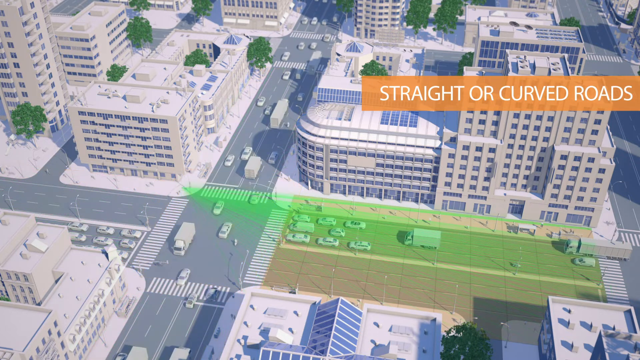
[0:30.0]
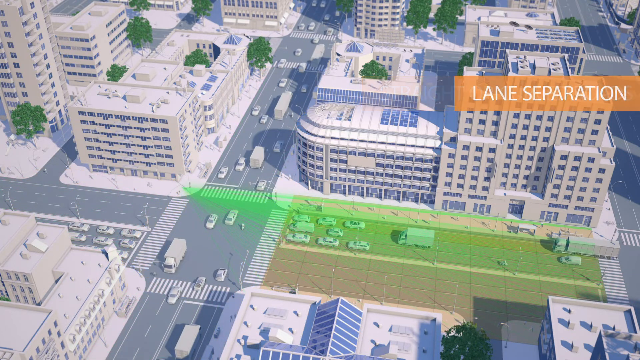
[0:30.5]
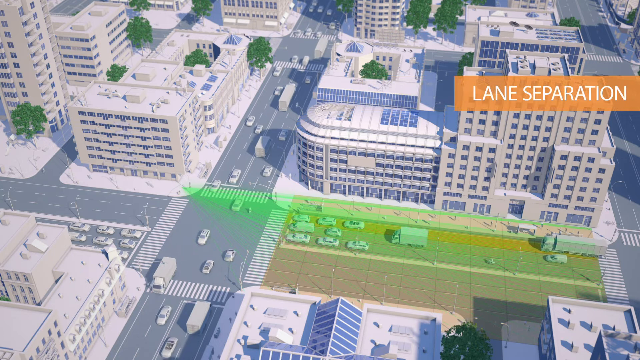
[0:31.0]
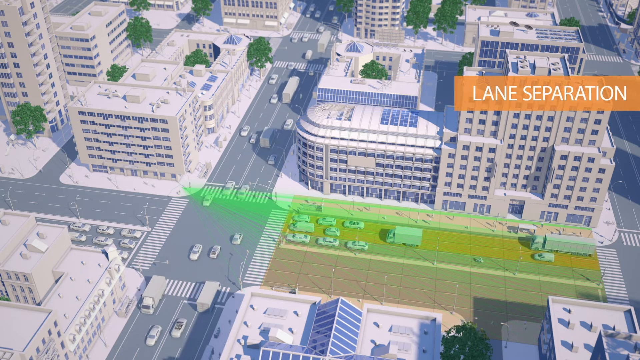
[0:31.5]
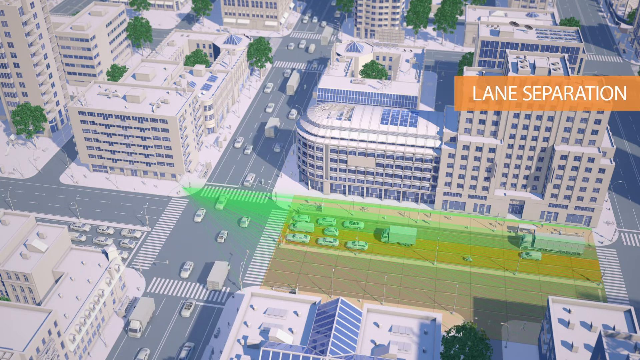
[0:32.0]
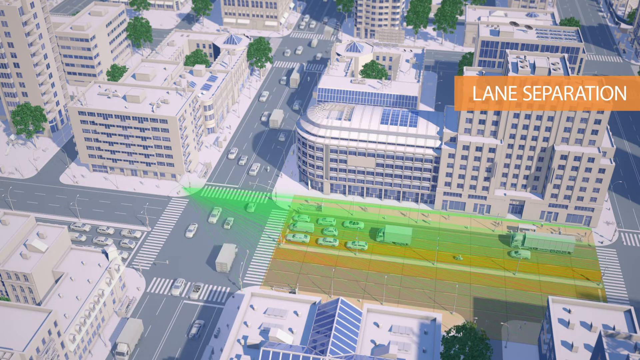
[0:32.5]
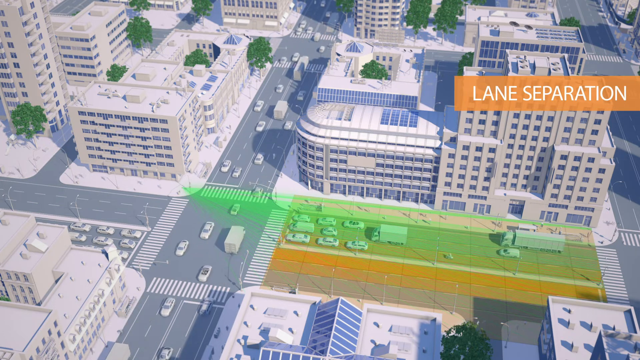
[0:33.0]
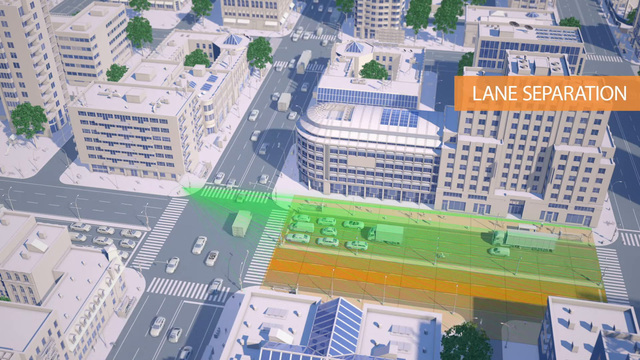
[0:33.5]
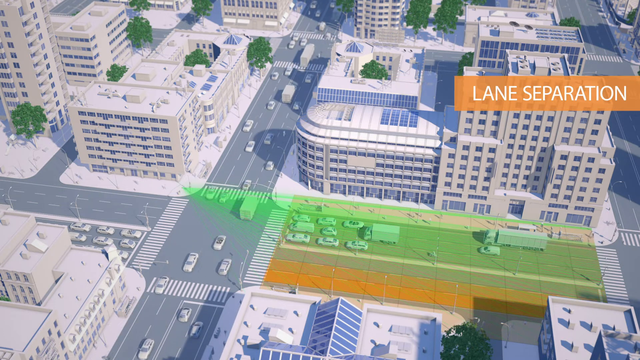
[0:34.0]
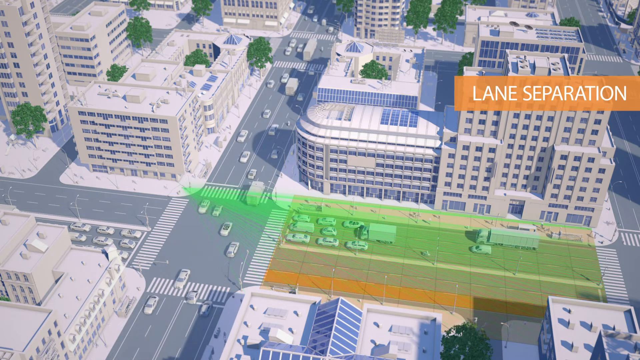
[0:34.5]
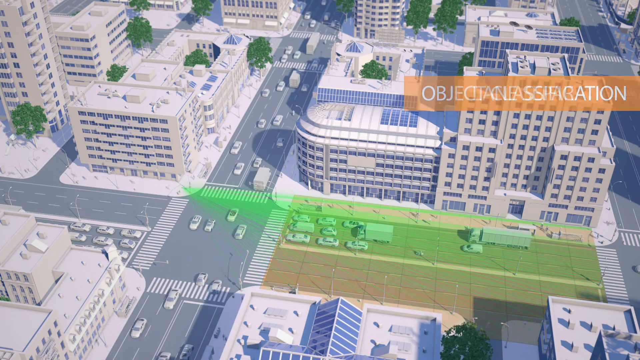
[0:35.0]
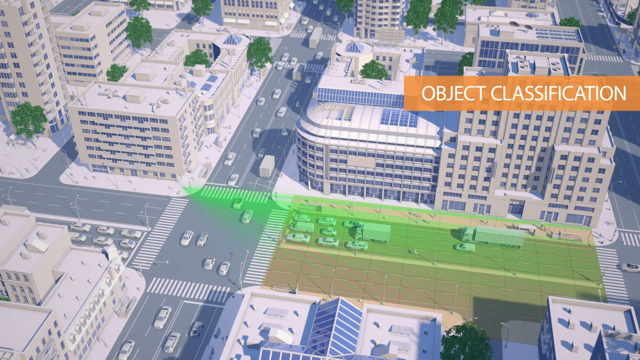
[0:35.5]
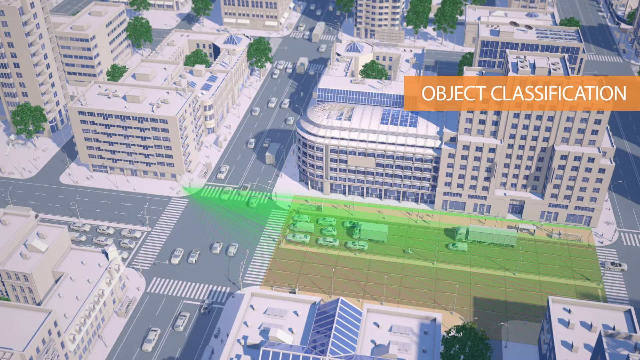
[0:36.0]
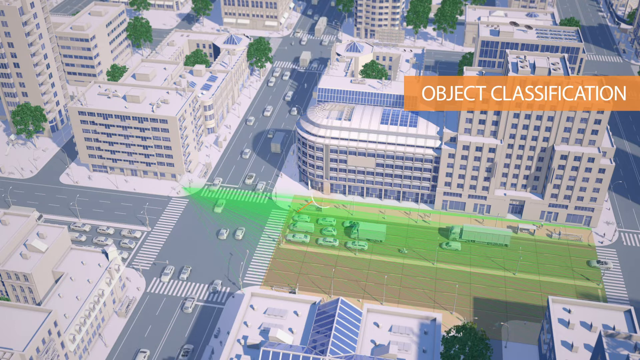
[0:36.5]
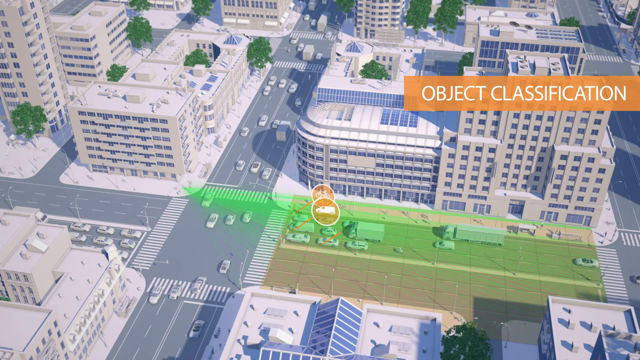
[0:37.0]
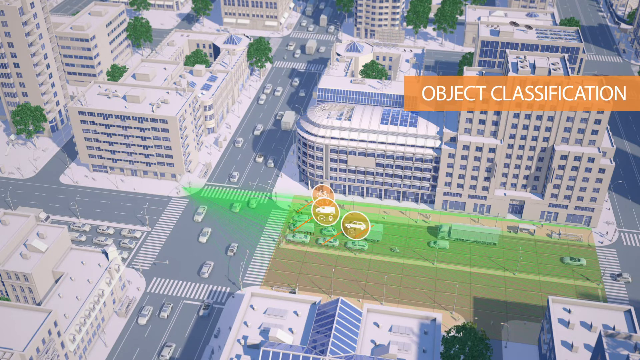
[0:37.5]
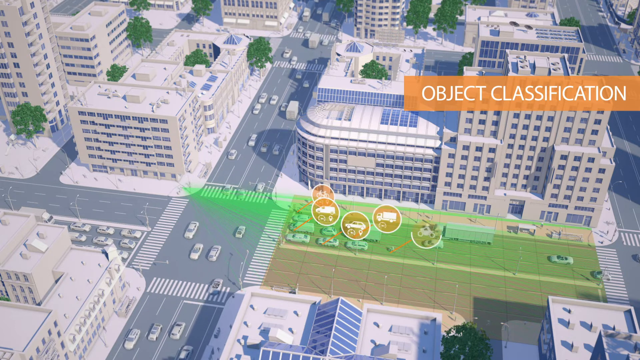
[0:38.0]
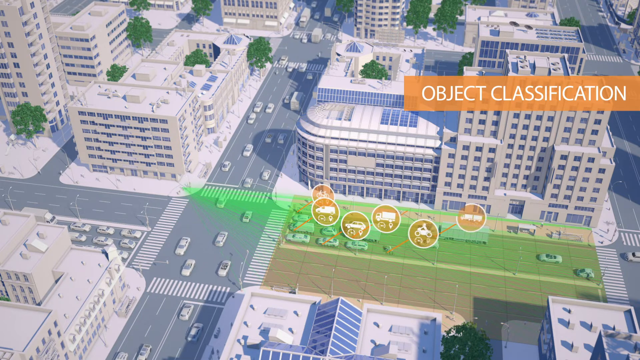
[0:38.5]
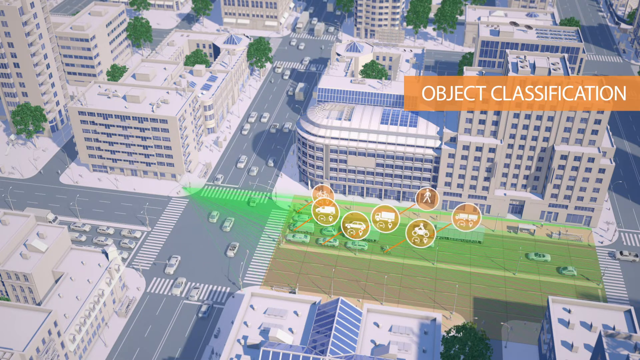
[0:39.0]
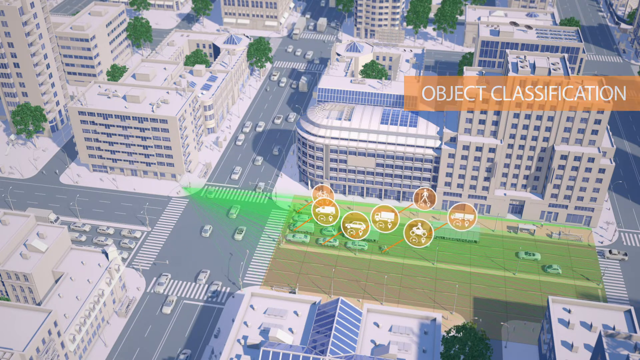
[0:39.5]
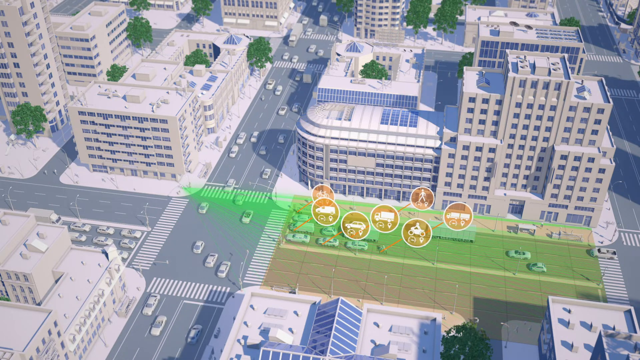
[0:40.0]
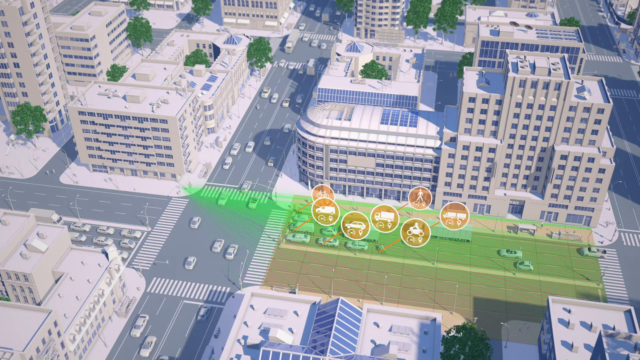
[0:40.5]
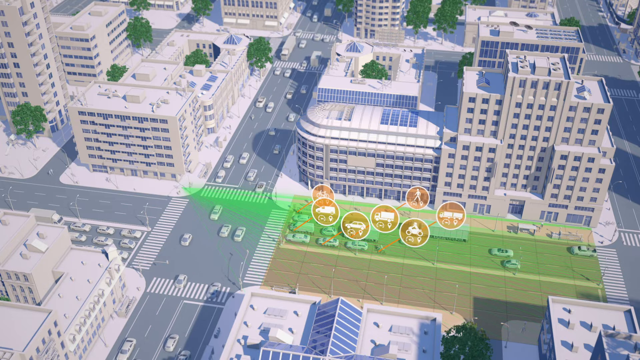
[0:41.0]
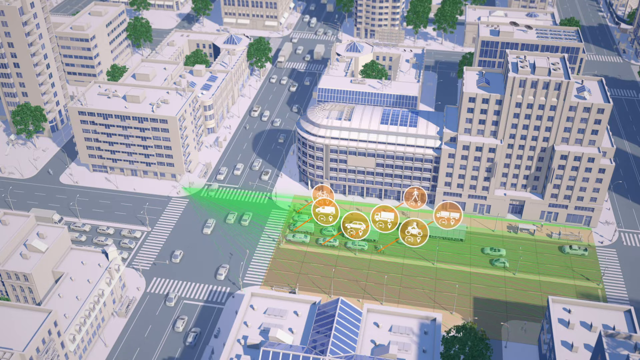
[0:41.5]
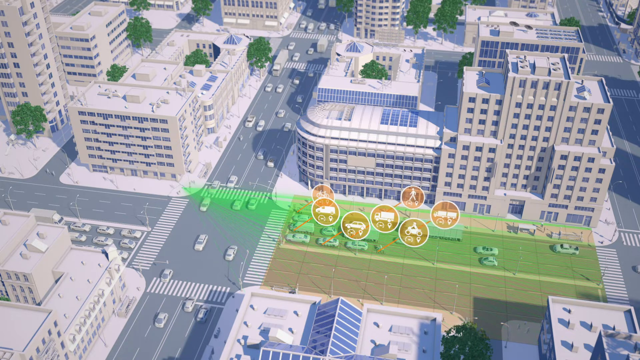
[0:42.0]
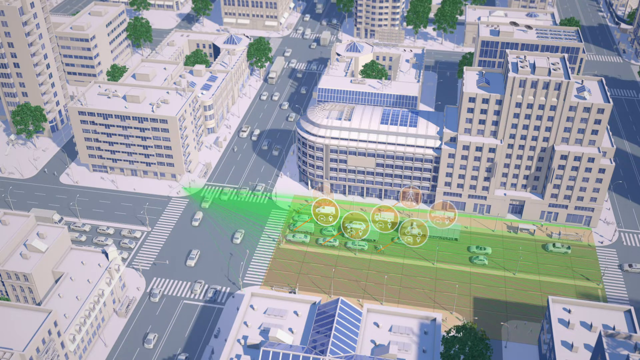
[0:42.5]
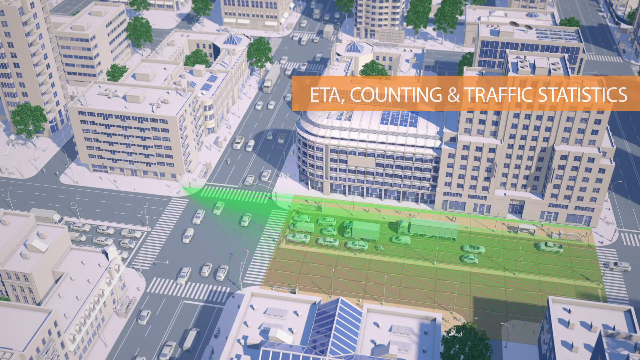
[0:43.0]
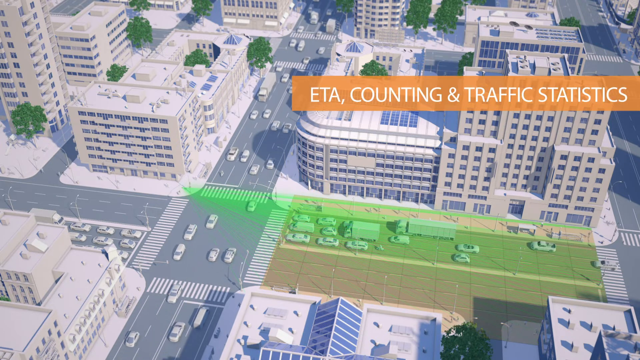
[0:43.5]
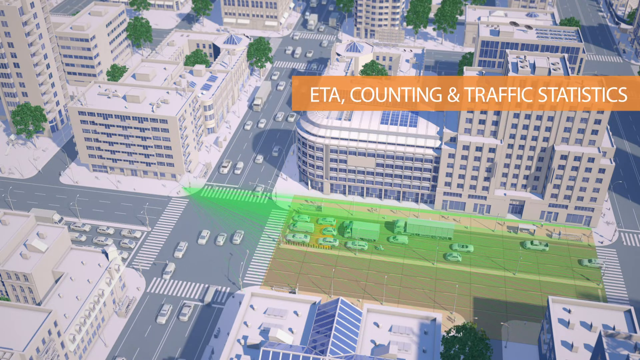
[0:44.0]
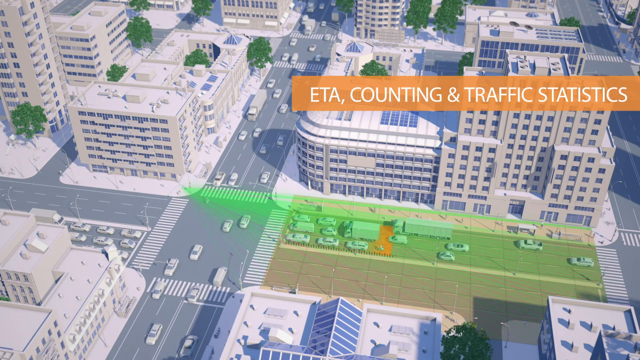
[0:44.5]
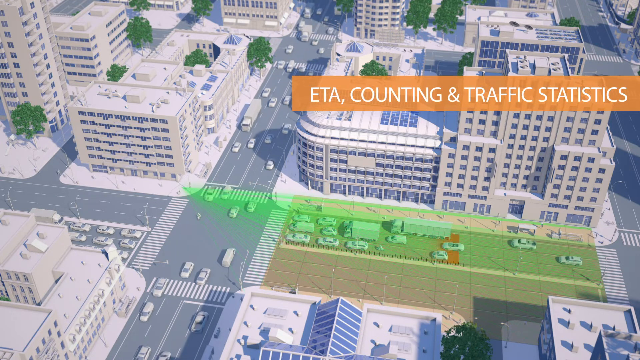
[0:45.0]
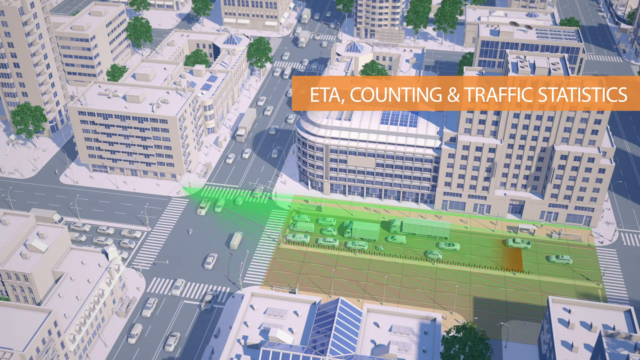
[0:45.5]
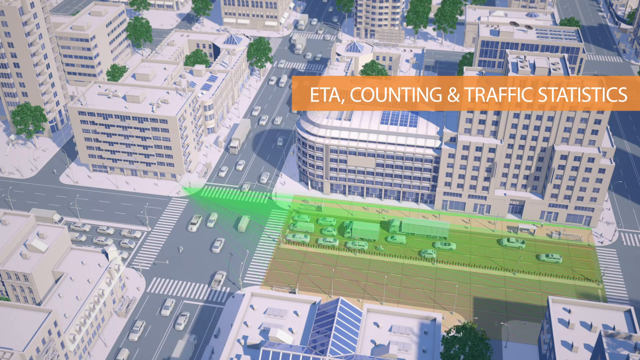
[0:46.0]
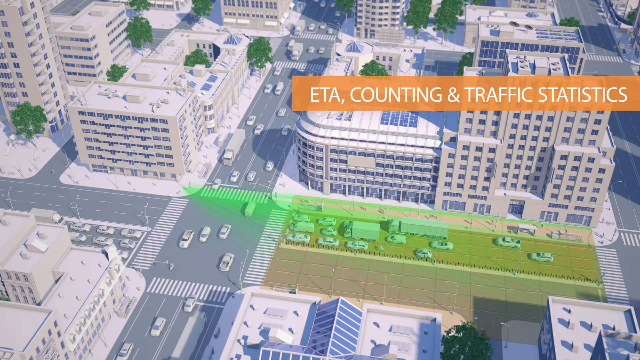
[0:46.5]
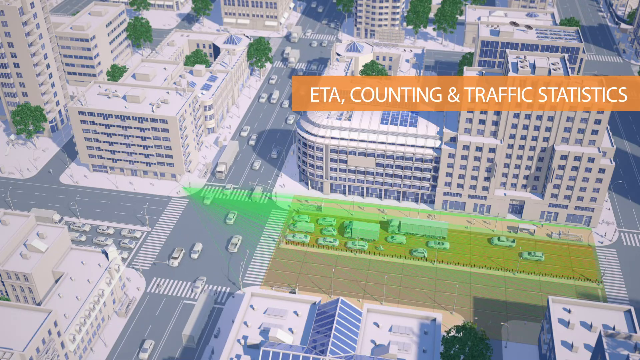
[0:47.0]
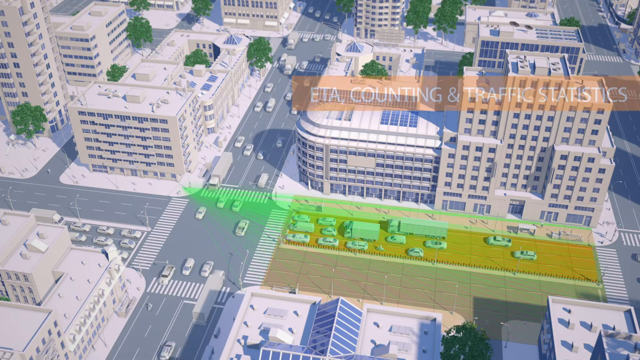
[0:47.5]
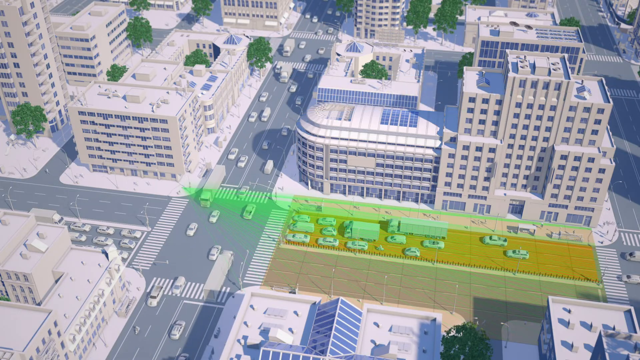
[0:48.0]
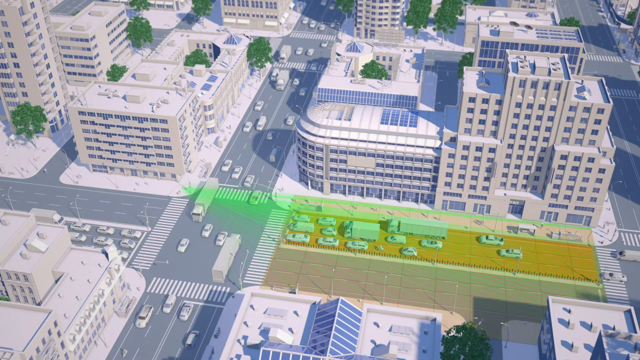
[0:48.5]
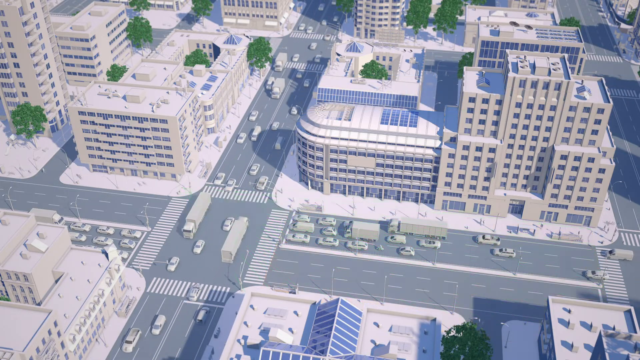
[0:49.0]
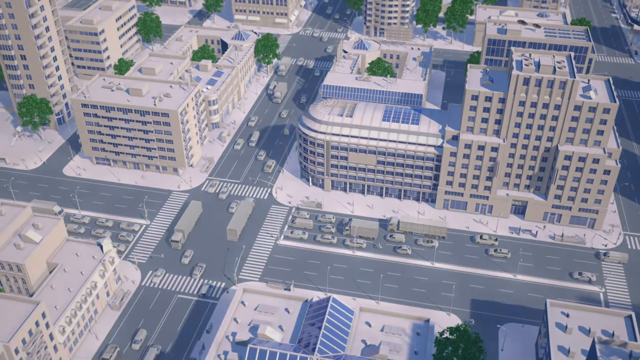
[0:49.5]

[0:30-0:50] Phrases appear for straight-to-curved roads and lane separation, followed by "Object classification," showing that the sensor identifies the type of vehicle pulling up: bicycle, SUV, car and 18-wheeler. Further phrases mention ETA, counting and traffic statistics, with graphics of the sensor scanning the roads and lanes.